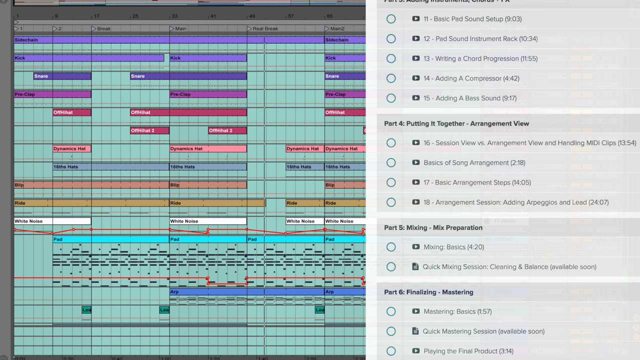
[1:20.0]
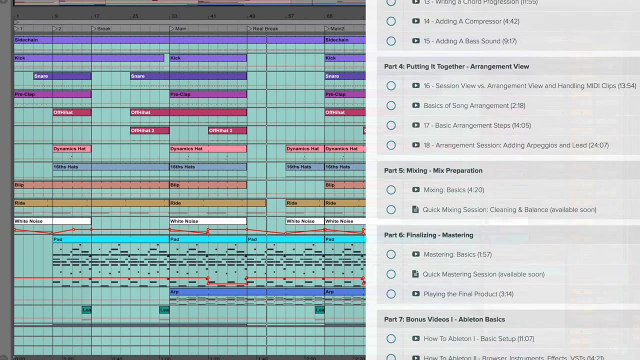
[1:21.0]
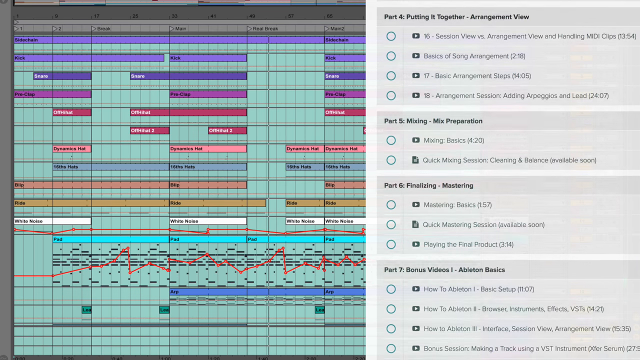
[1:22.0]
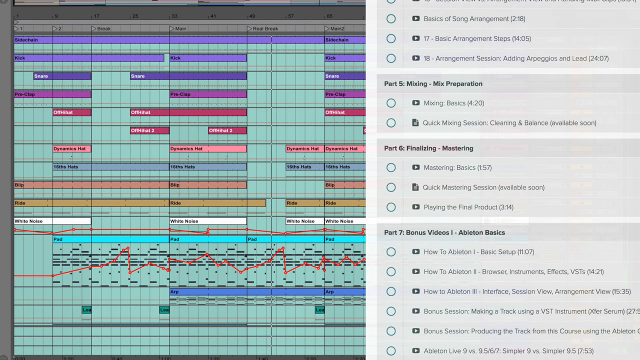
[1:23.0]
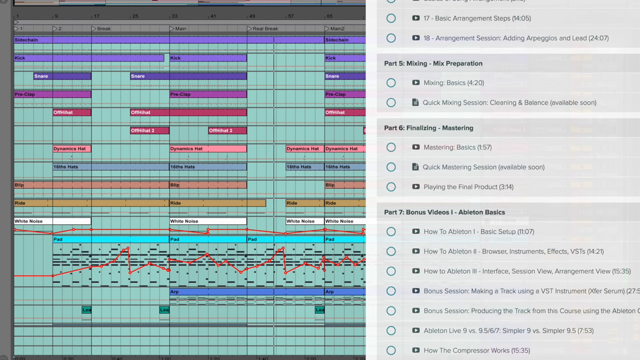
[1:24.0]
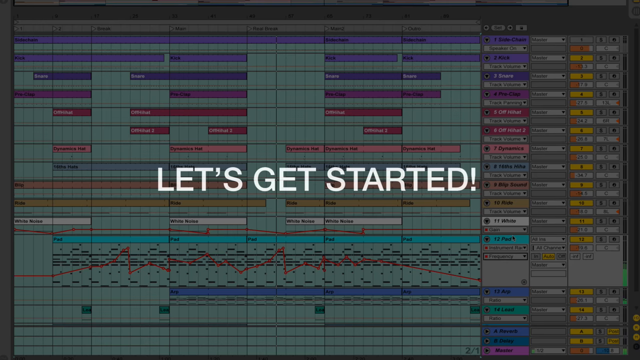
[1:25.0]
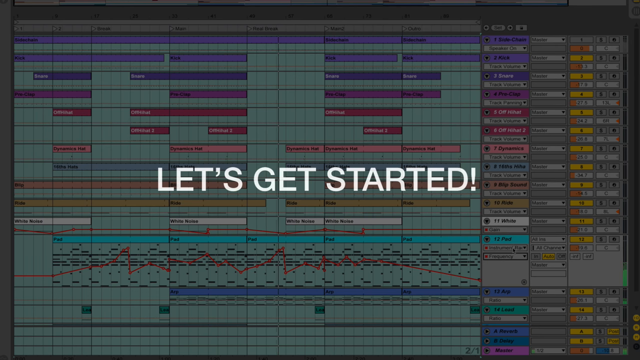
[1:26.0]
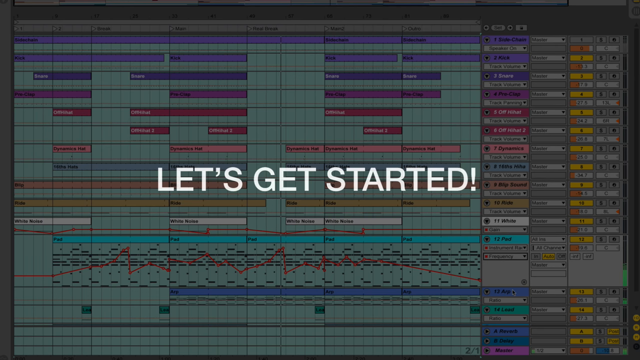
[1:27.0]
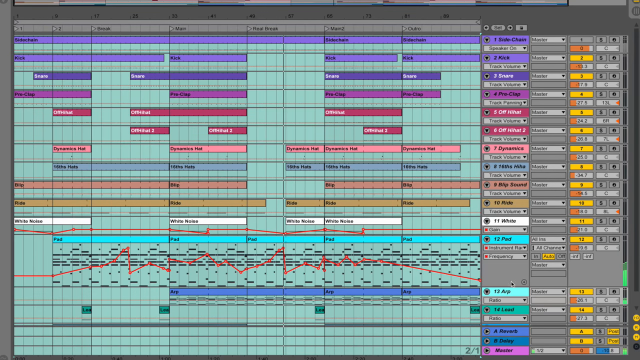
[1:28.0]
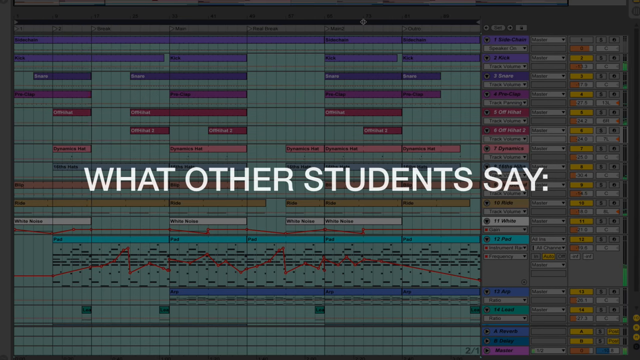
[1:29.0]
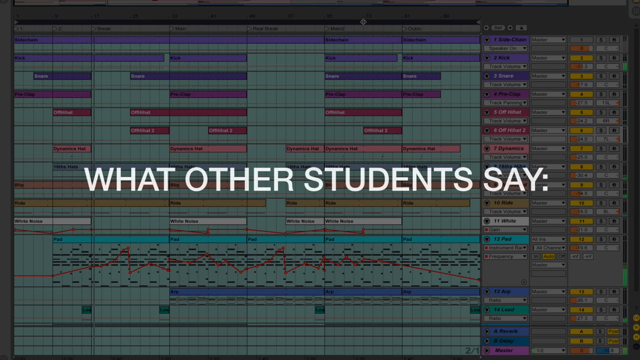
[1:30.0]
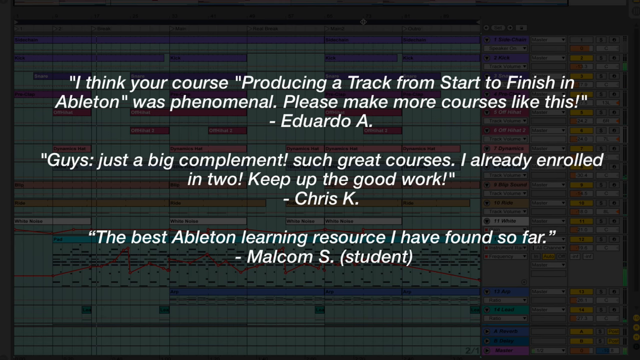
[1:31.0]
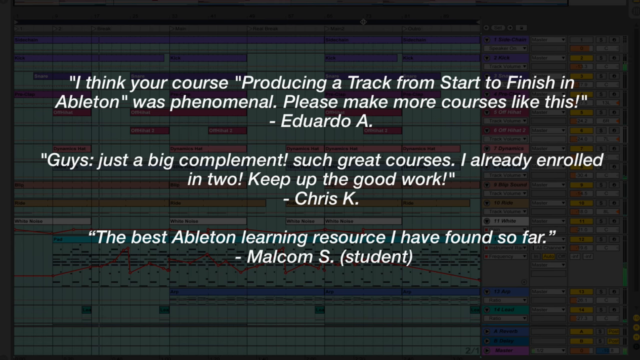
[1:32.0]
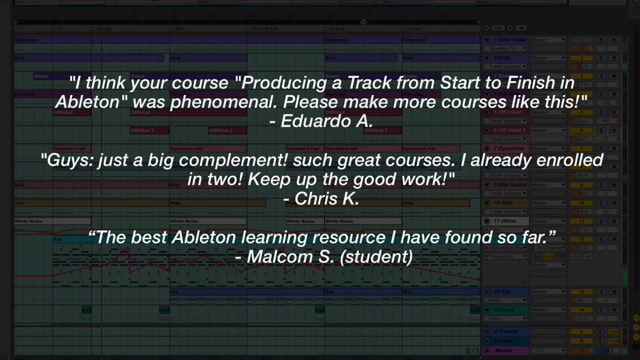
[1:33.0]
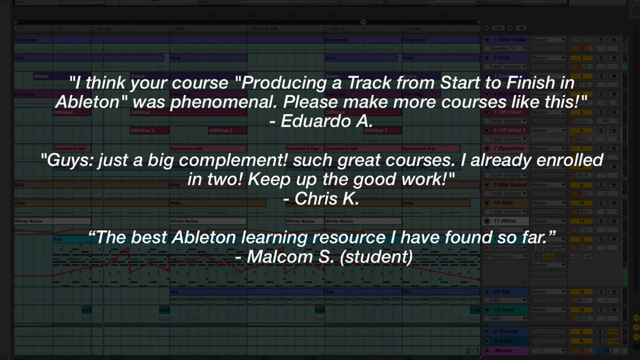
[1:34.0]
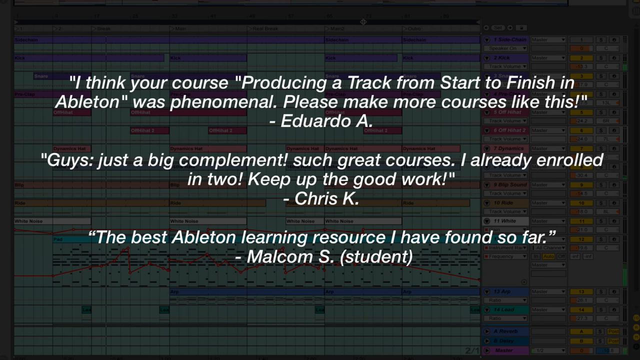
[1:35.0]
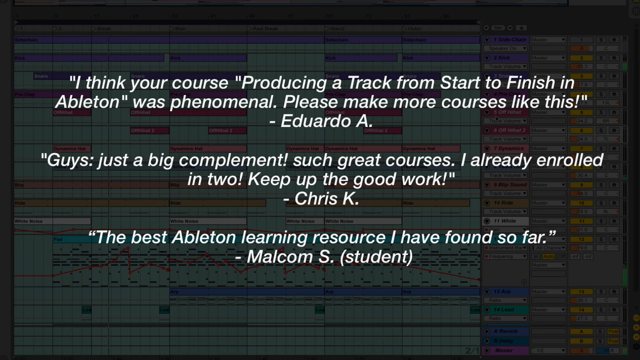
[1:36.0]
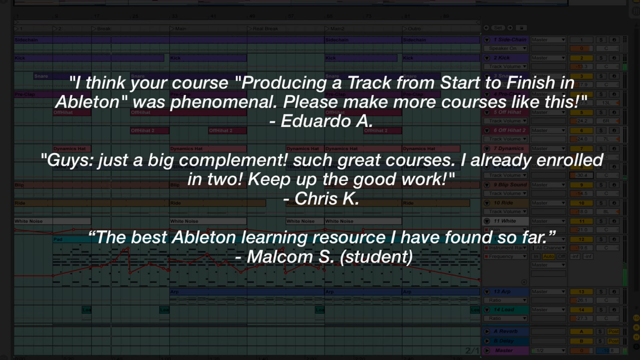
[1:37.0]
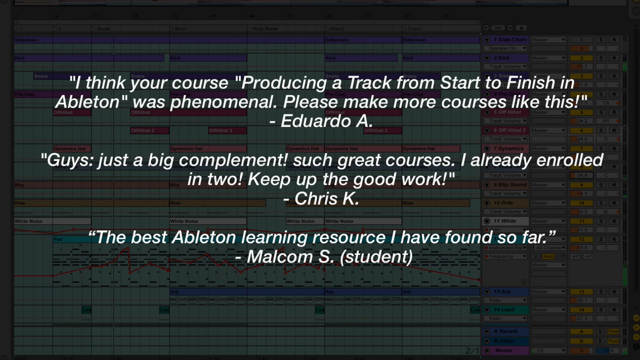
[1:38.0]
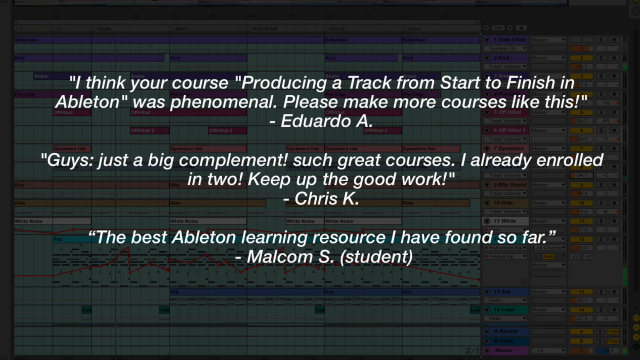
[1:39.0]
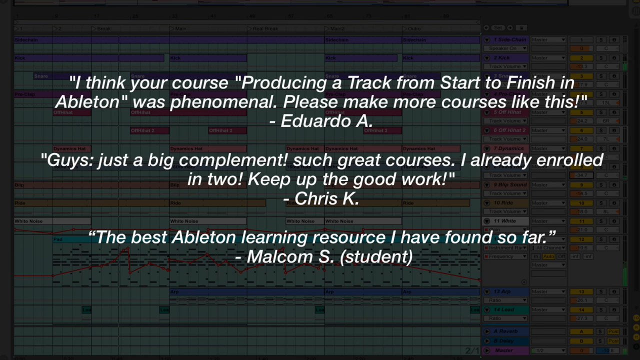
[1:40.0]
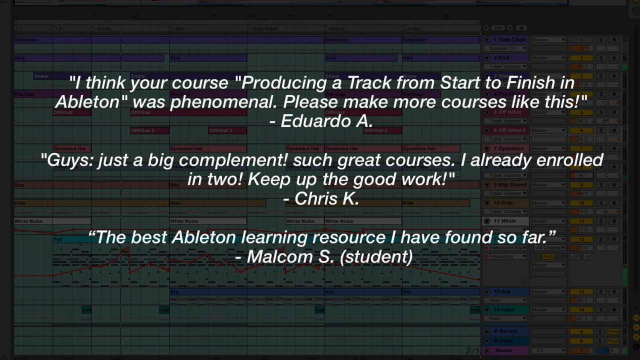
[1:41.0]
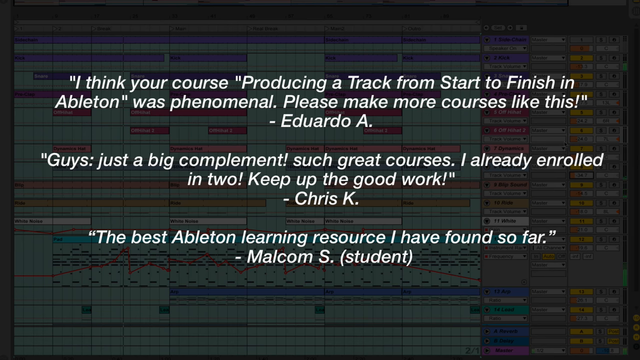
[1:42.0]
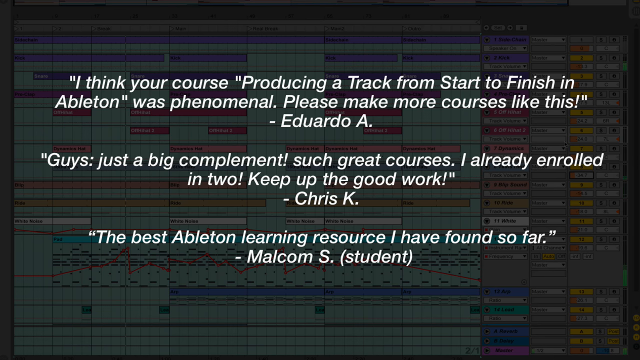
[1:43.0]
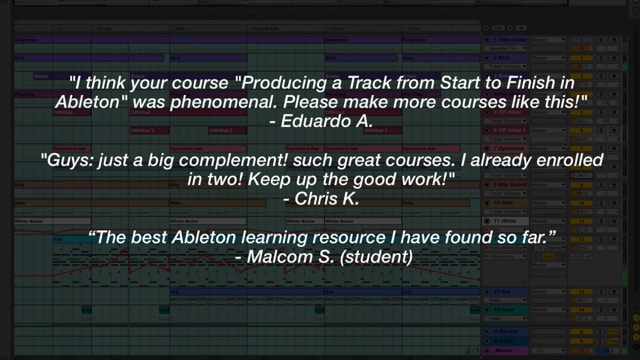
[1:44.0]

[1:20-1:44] The complex interface of the music application is shown again as the individual scrolls down looking for the next part. Text on a transparent gray screen reads "let's get started." "What other students say" comes up next, and the interface briefly moves again for a second. Student quotes about the course follow. One from Eduardo a says "I think your course producing a track from start to finish in Ableton was phenomenal. Please make more courses like this." Another, by Chris K, includes "keep up the good work." Another from Malcolm s says "the best Ableton learning resource. I have found so far." The video stops on these positive quotes.